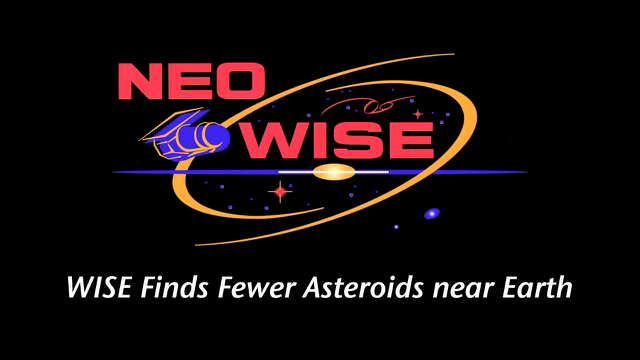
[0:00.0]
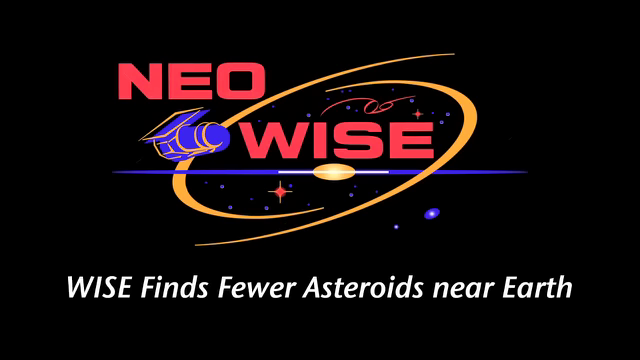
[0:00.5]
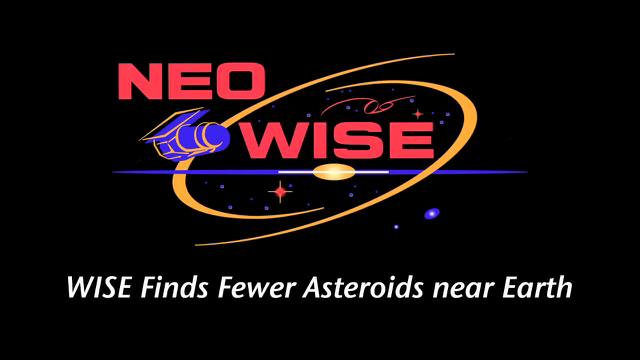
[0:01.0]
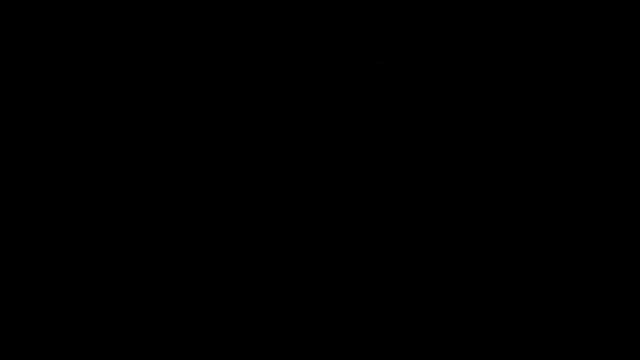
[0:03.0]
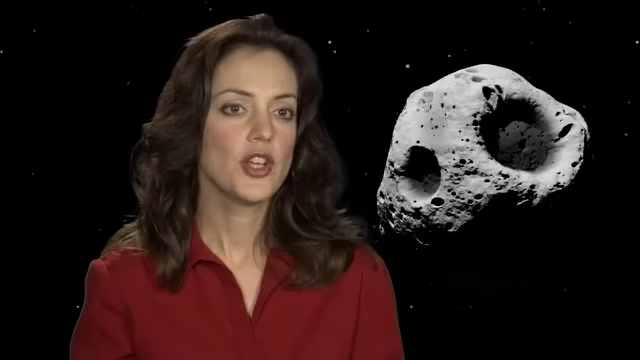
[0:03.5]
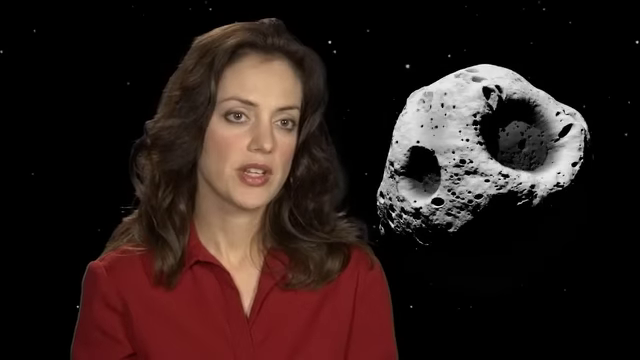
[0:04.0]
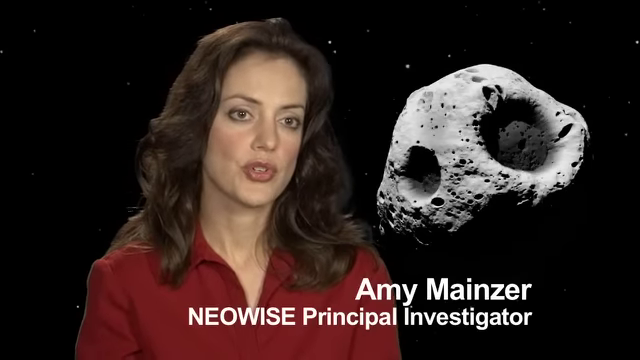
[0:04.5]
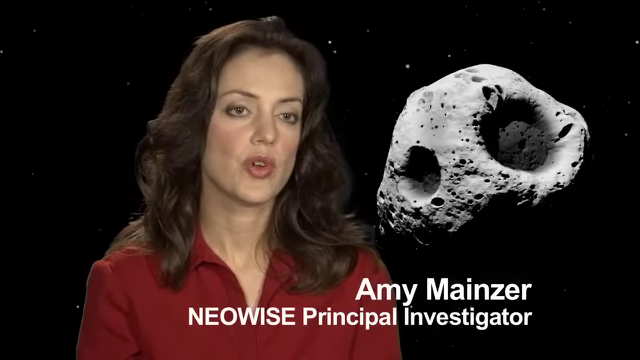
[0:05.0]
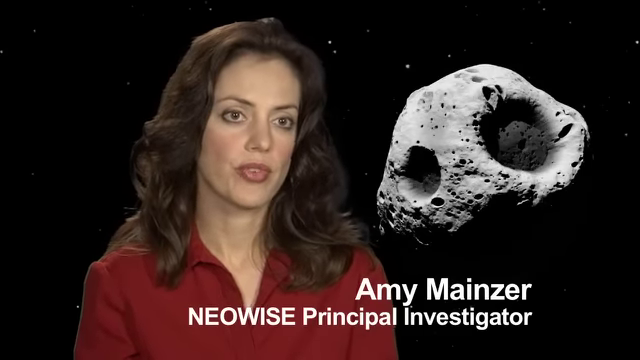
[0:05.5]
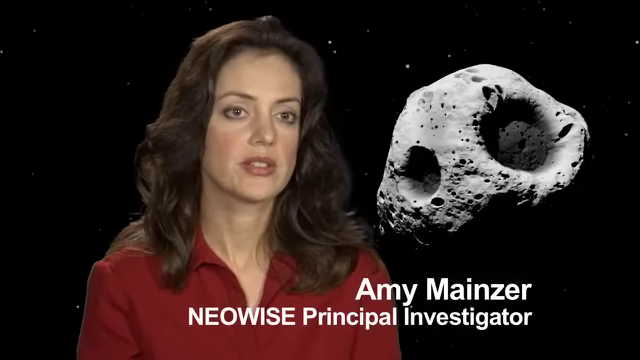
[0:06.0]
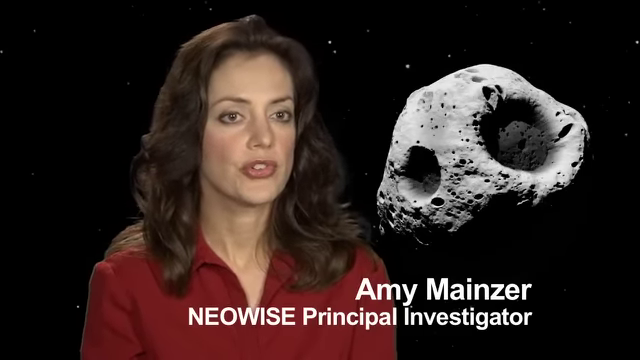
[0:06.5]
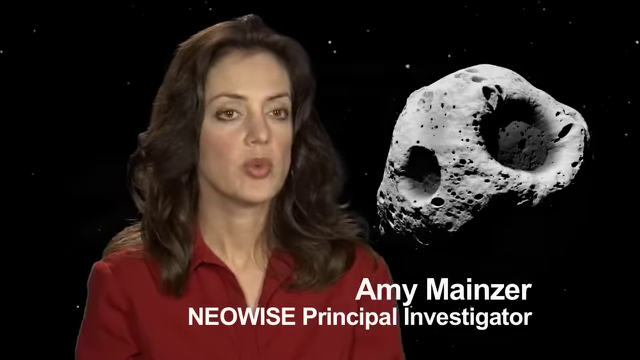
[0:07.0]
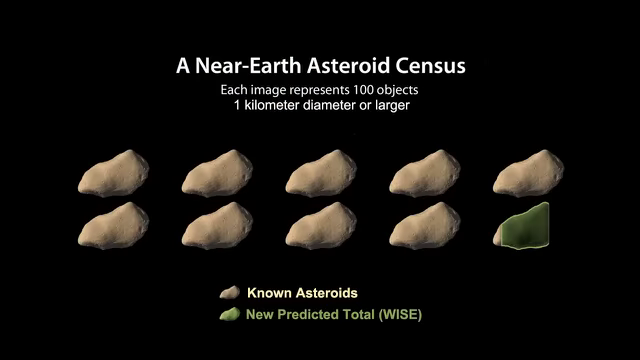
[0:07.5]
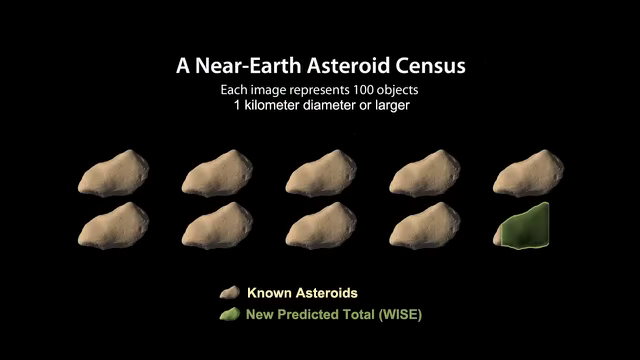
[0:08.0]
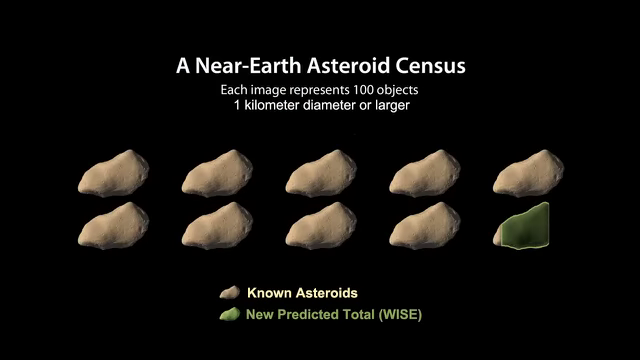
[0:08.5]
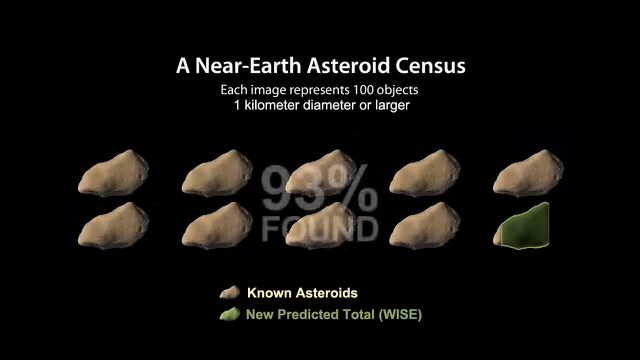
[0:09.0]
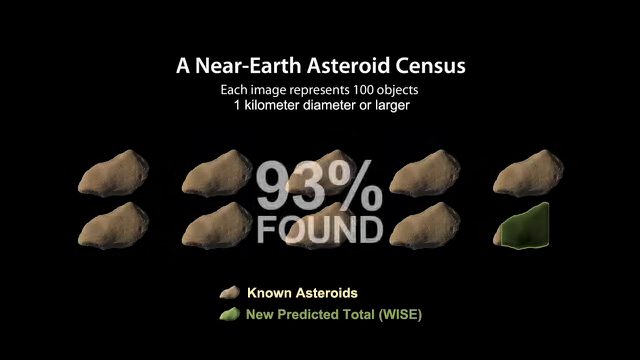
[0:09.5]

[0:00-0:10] In red bold letters, "NEO WISE" appears over a view of outer space, with a satellite, a circular shape and stars in the distance. At the bottom, in white bold letters, is "WISE finds fewer asteroids near Earth". A middle-aged woman, maybe 40 years old, with dark hair and a red top appears; behind her is what appears to be an asteroid. She is identified as Amy Mainzer, NEOWISE Principal Investigator. Next comes a near-Earth asteroid census, which says "each image represents 100 objects" and "one kilometer diameter or larger". There are nine images and part of another one, with labels for the known asteroids and the new predicted total.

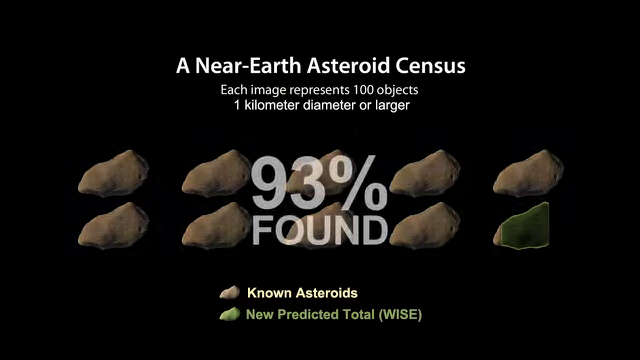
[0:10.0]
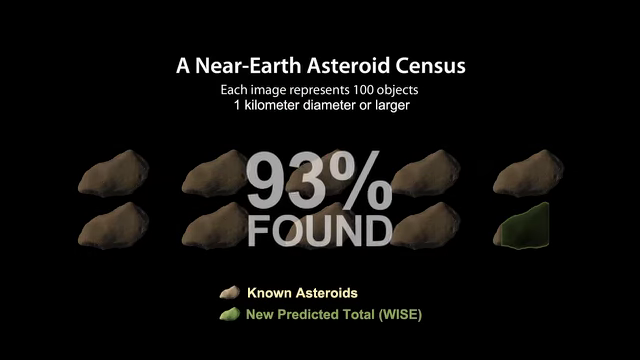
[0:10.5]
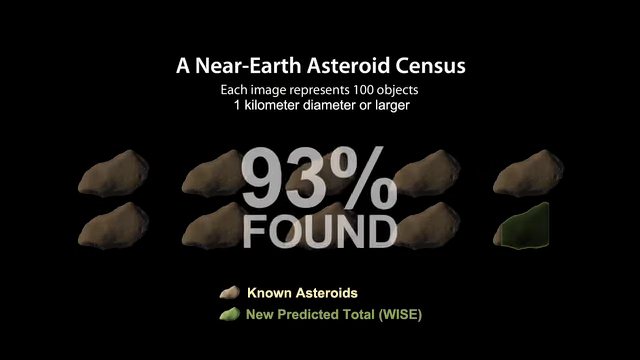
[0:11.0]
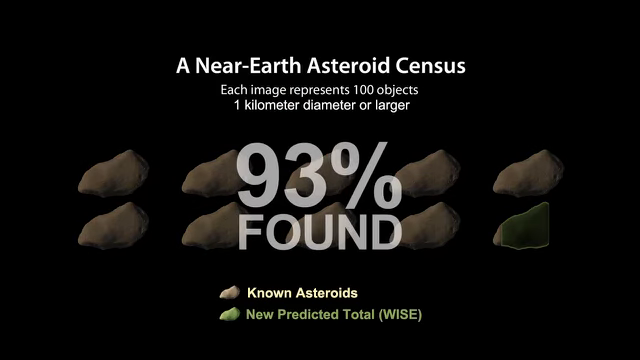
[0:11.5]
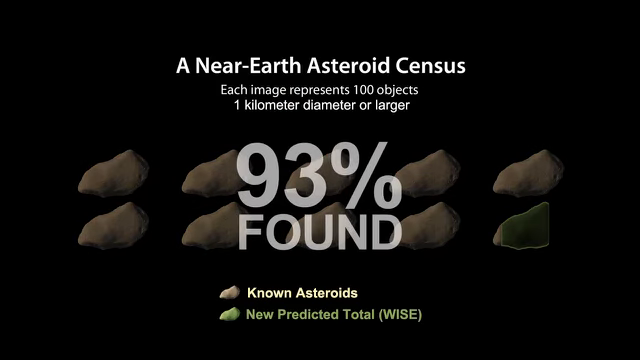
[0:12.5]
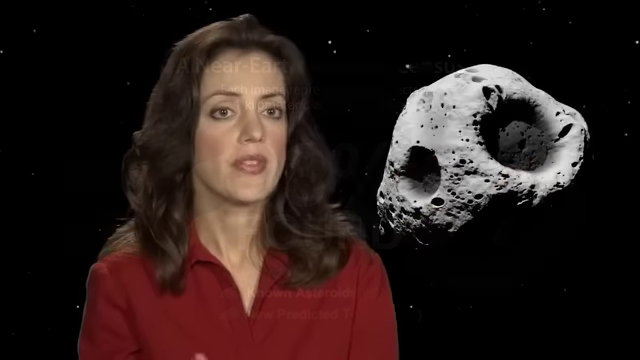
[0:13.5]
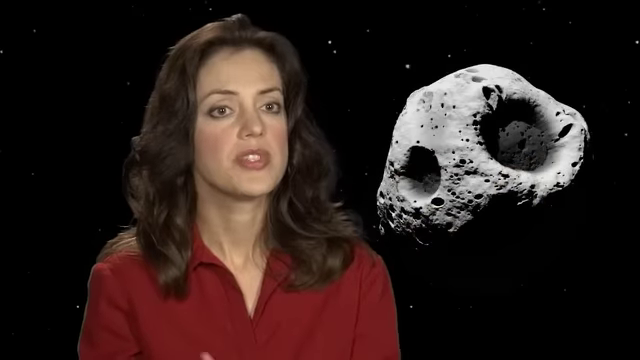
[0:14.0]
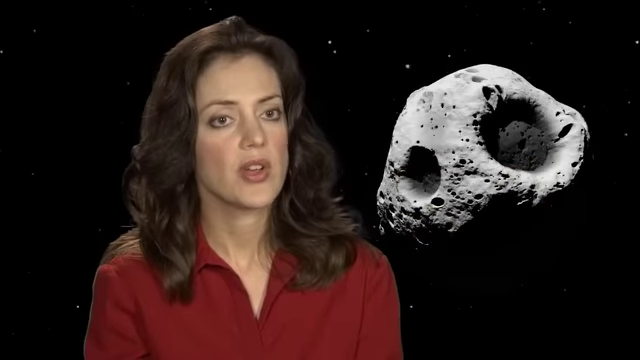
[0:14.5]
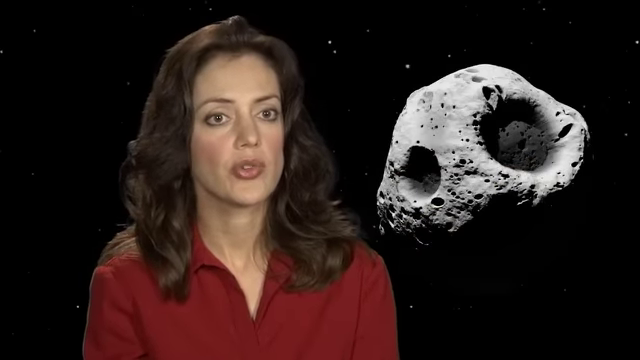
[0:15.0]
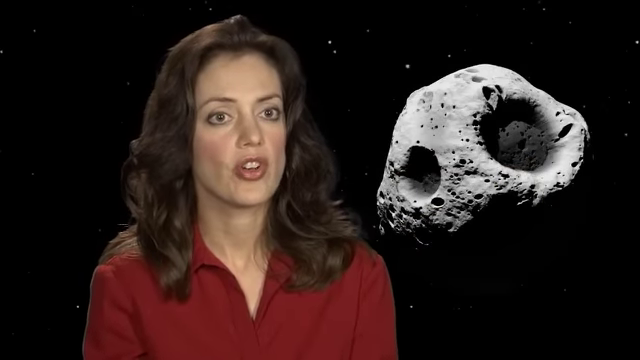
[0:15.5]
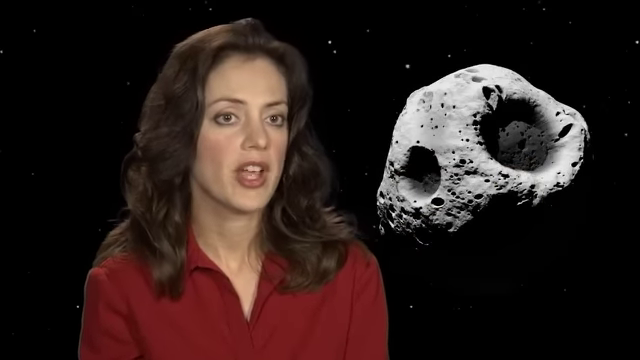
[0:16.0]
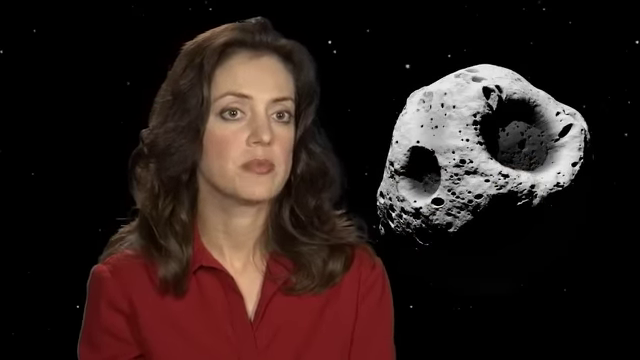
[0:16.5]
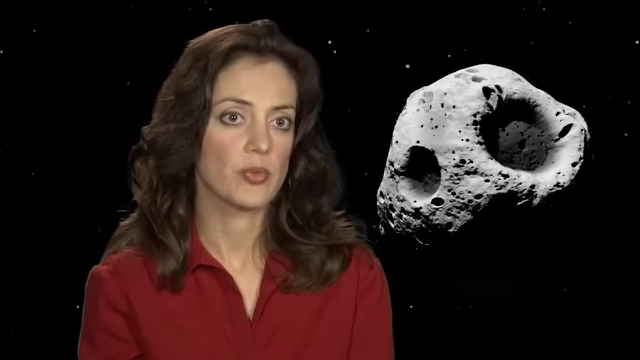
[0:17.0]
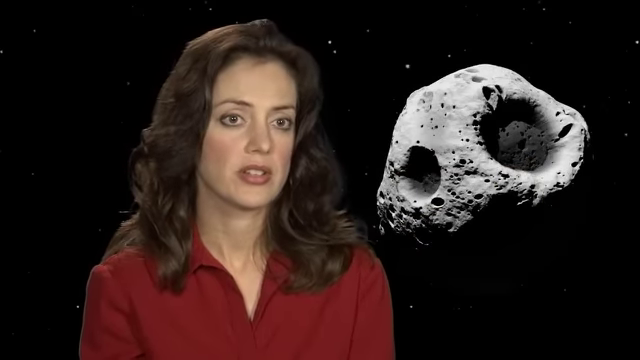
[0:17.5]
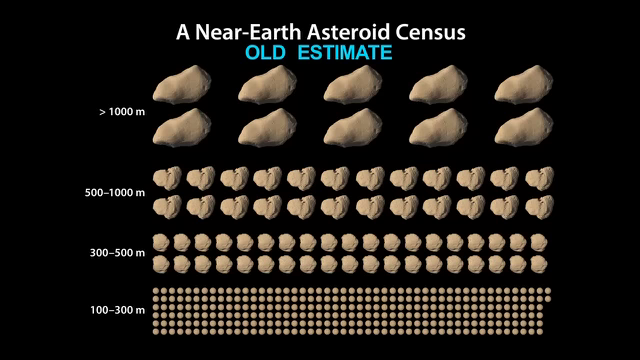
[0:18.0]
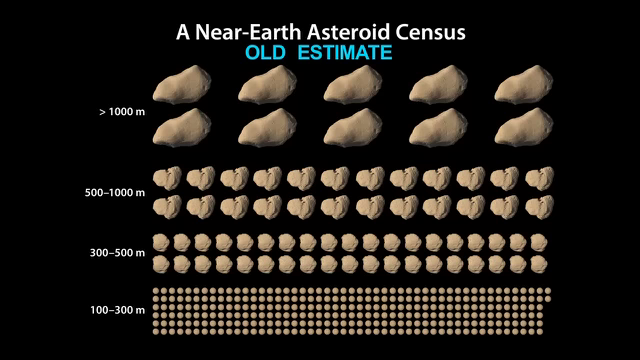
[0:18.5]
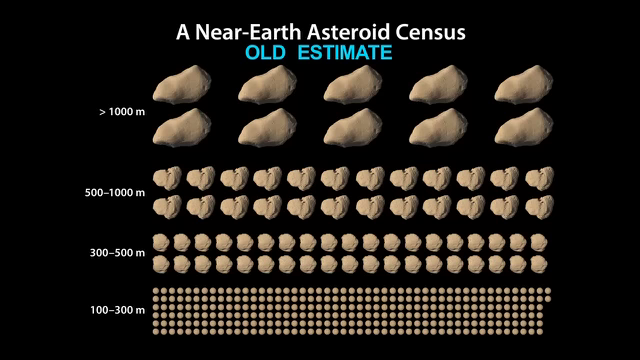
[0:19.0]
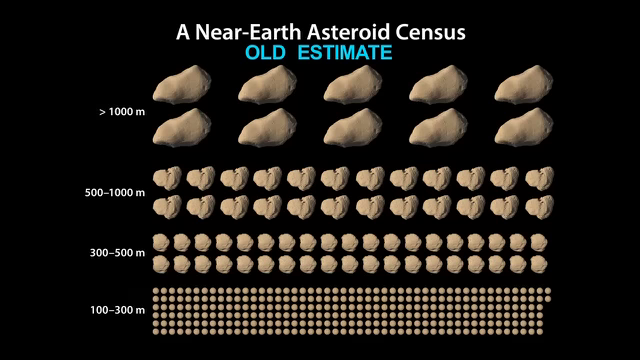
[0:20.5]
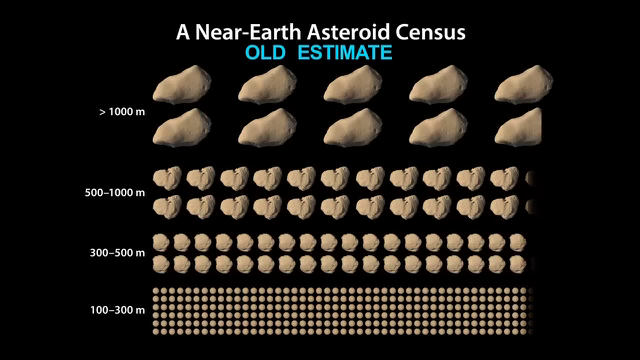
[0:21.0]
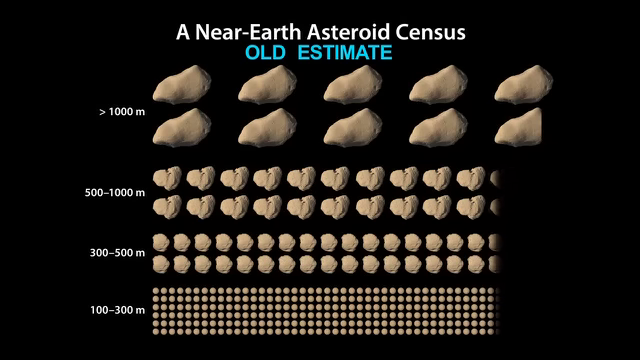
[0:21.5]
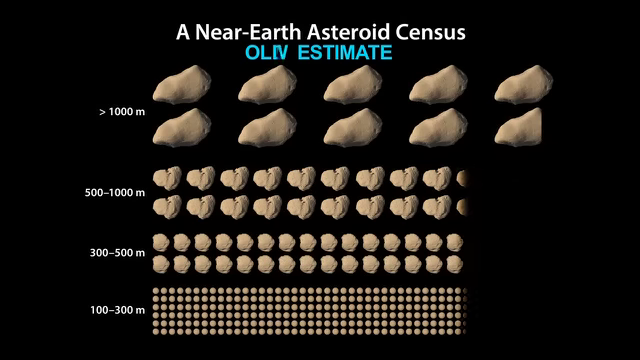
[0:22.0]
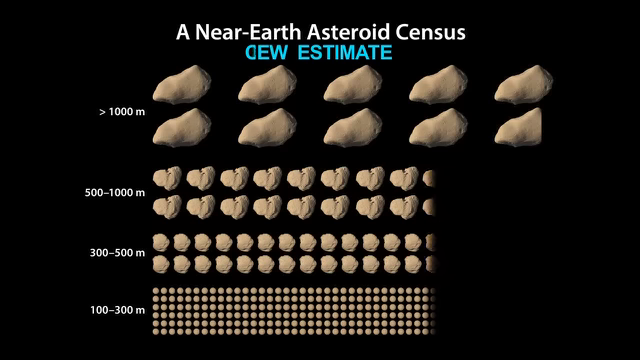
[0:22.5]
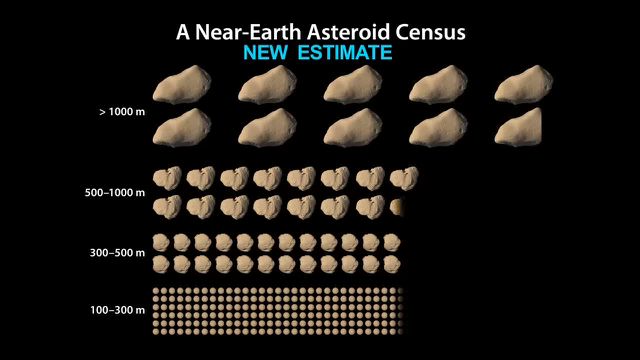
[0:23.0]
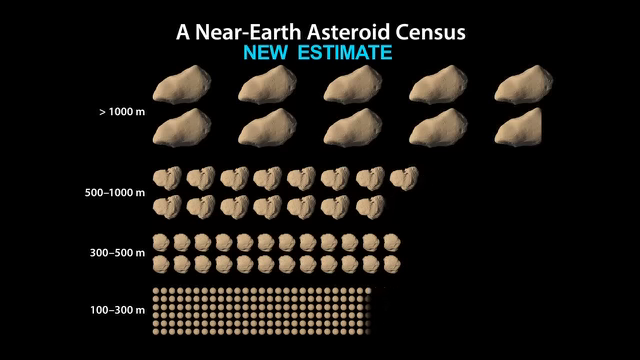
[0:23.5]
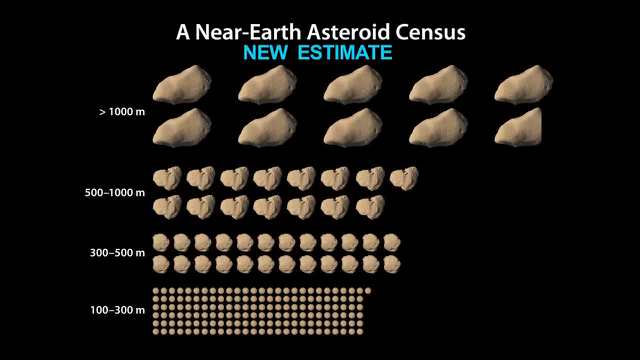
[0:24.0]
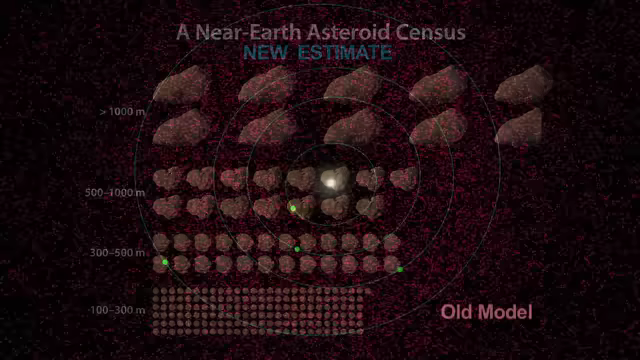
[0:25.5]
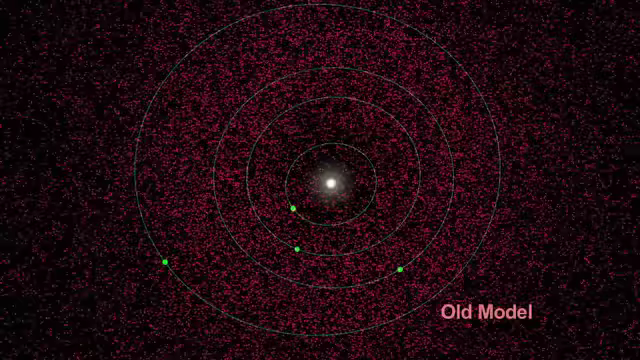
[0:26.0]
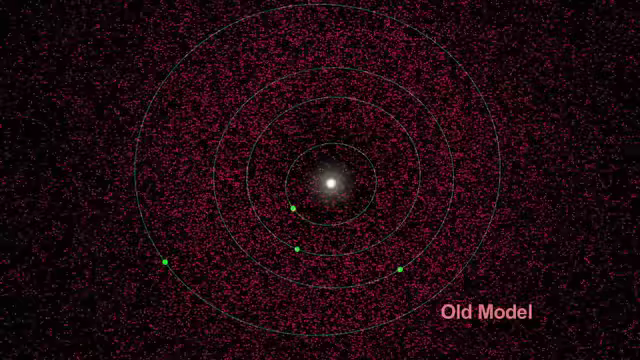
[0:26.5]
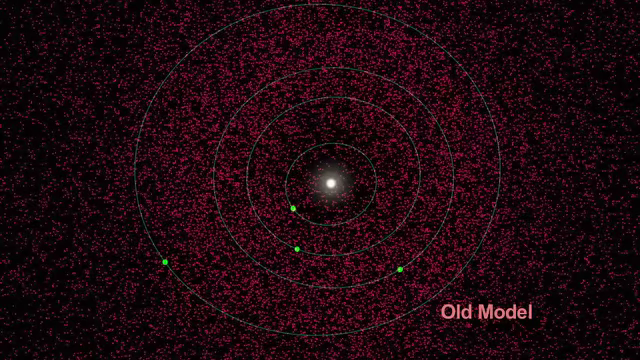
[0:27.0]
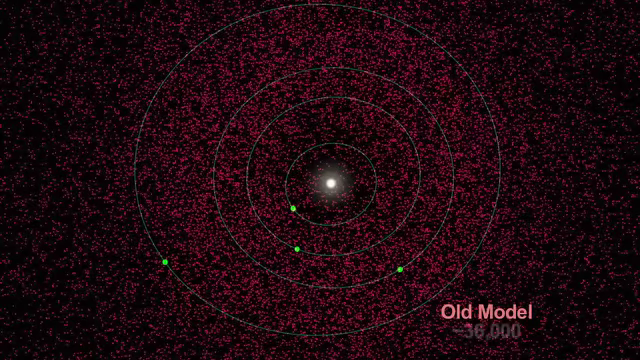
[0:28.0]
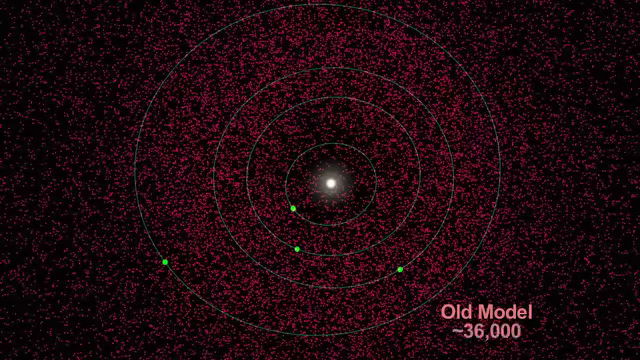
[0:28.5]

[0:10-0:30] A graph titled "near-Earth asteroid census" is shown. Underneath, in smaller letters, is "each image represents 100 objects", and below that, "one kilometer diameter or larger". The images below look like pieces of brown rock, and there are nine of them; at the bottom on the far right is part of one in green and black. The text reads "93% found". The brown asteroids are labeled as the known ones and the greenish part as the new predicted total. Then a woman in her mid to late 40s with dark hair and a red top is speaking, with a picture of an asteroid over her left shoulder.